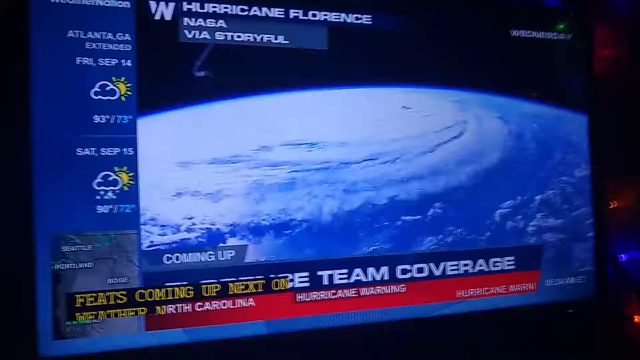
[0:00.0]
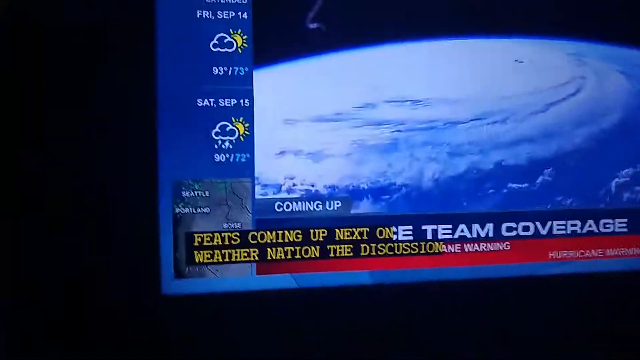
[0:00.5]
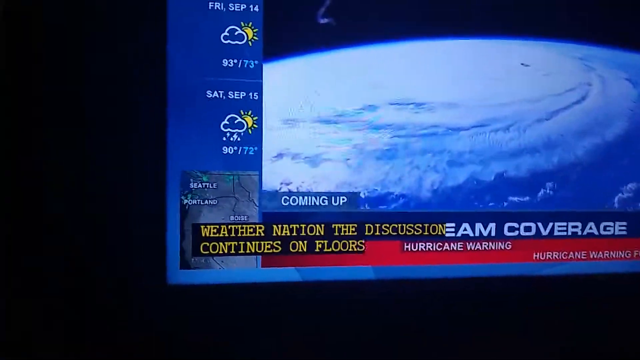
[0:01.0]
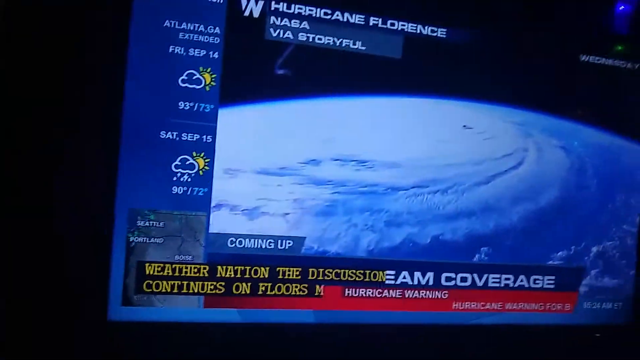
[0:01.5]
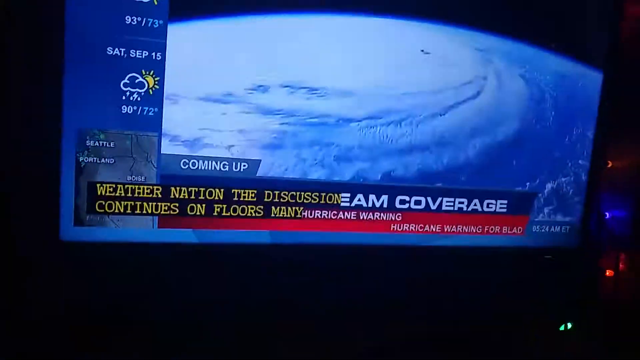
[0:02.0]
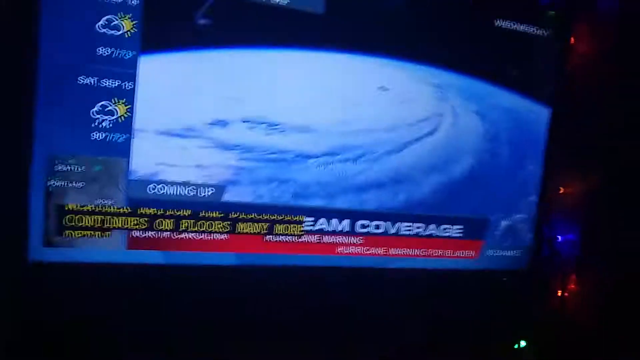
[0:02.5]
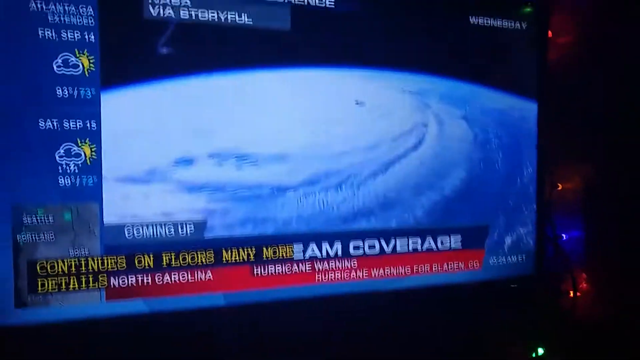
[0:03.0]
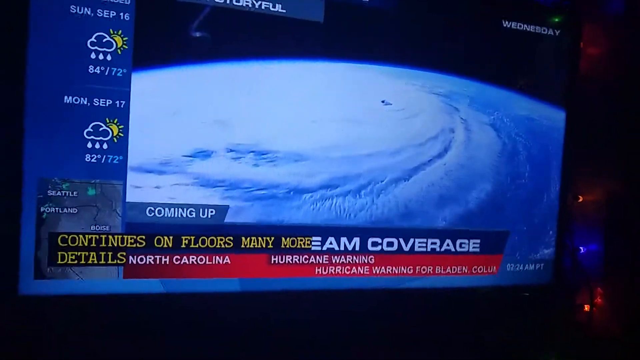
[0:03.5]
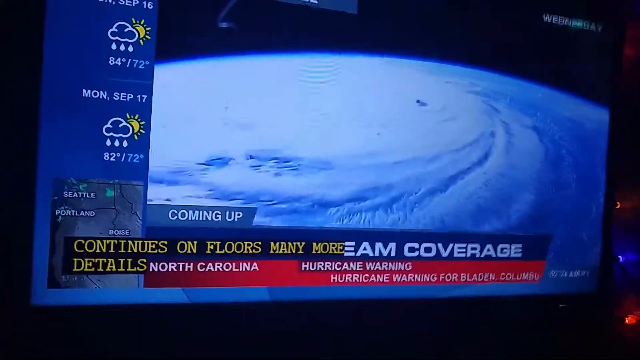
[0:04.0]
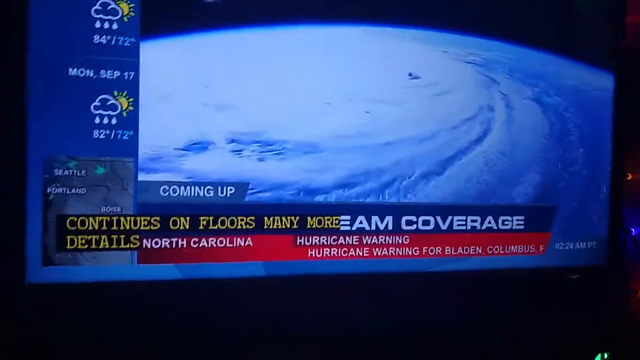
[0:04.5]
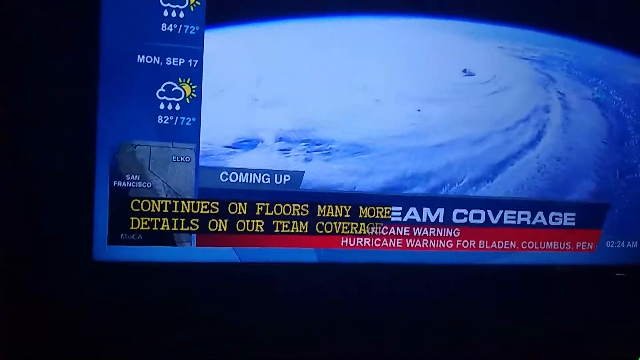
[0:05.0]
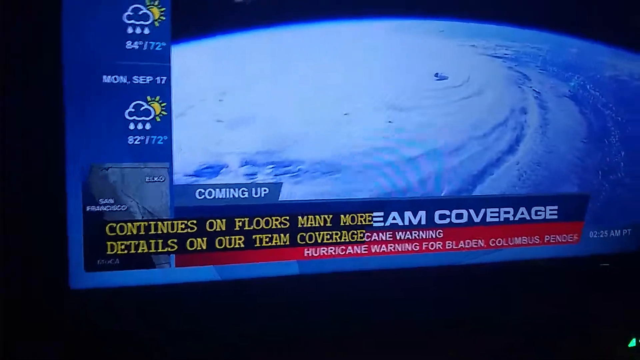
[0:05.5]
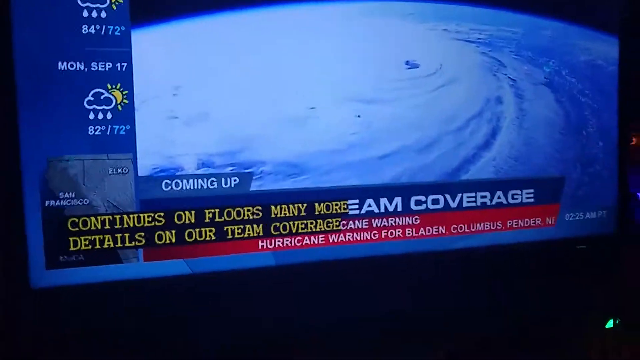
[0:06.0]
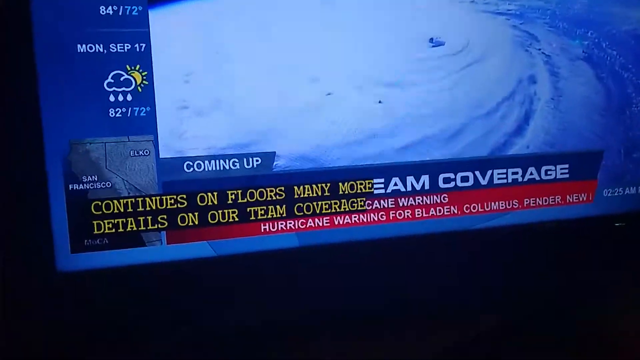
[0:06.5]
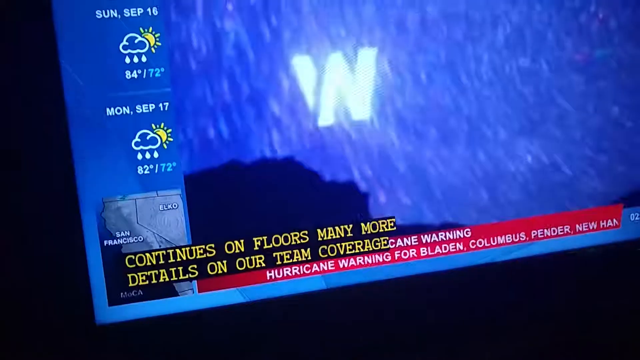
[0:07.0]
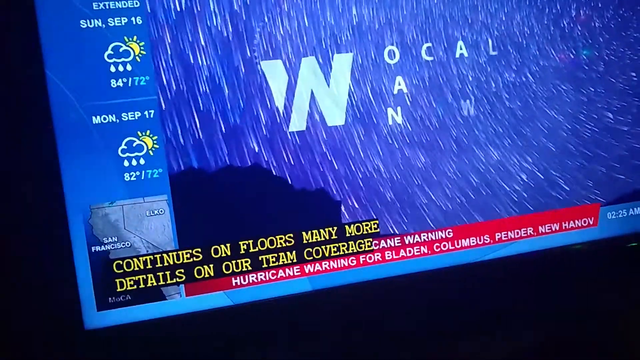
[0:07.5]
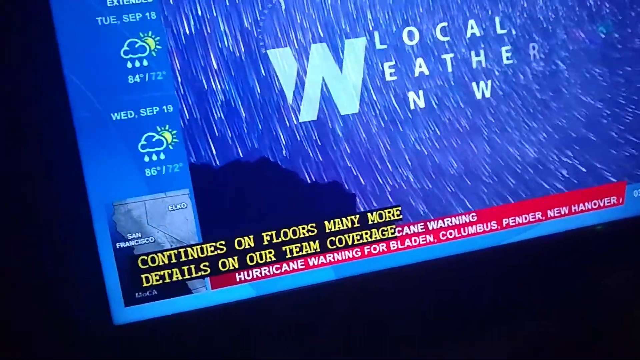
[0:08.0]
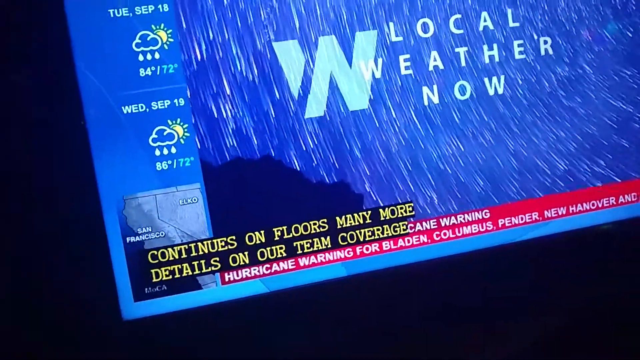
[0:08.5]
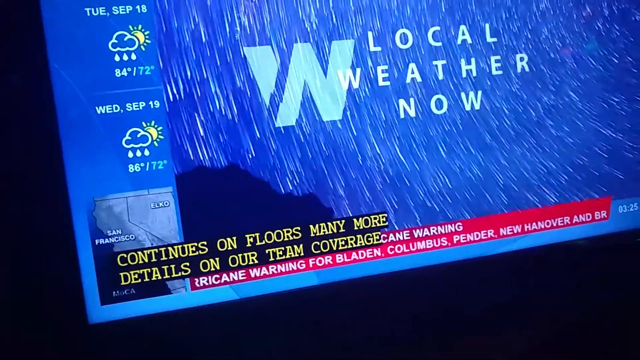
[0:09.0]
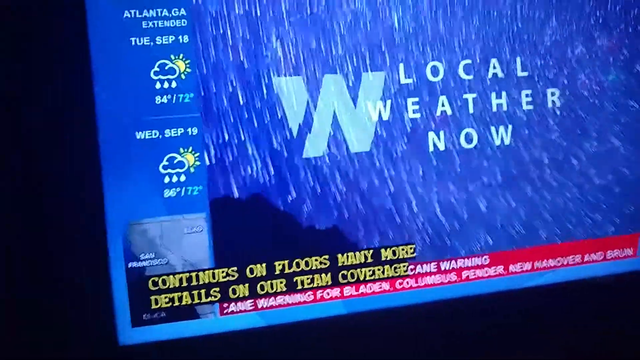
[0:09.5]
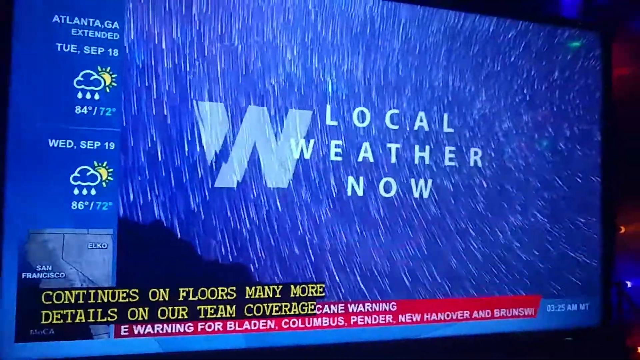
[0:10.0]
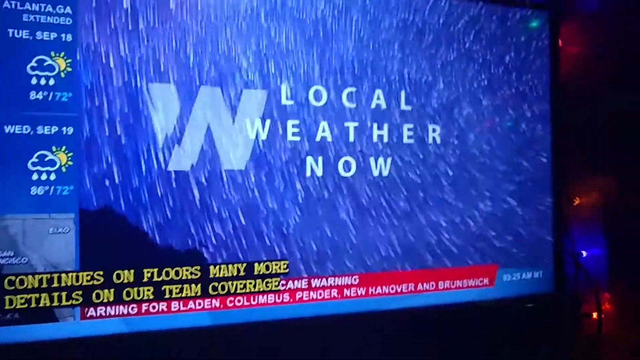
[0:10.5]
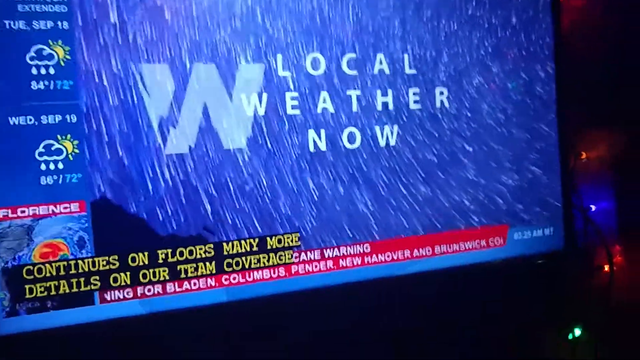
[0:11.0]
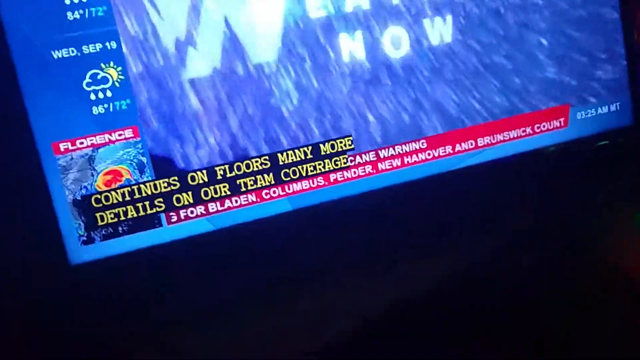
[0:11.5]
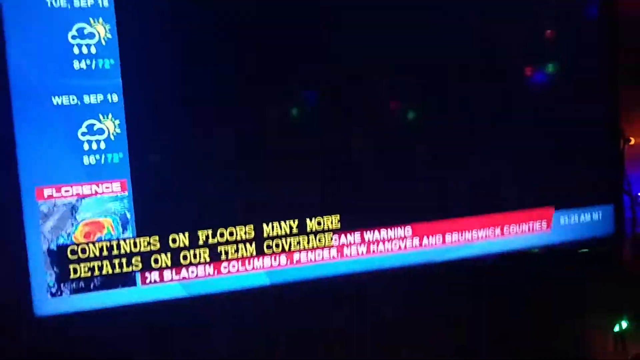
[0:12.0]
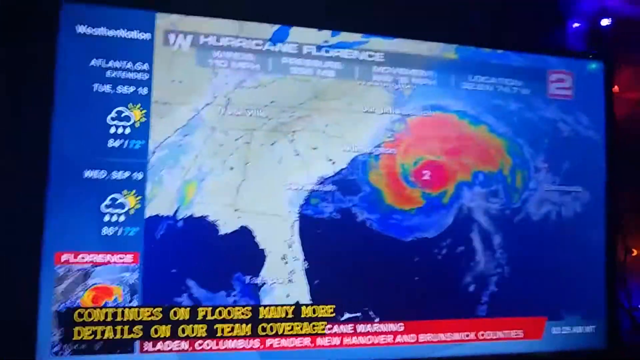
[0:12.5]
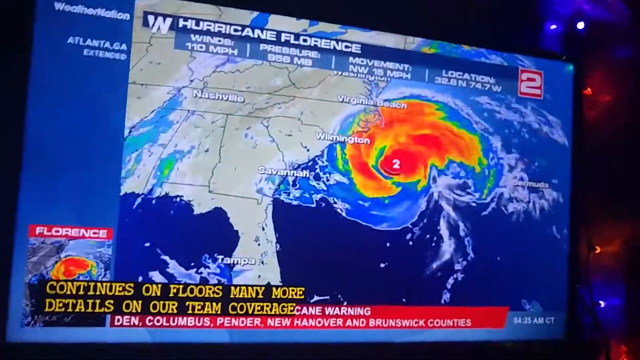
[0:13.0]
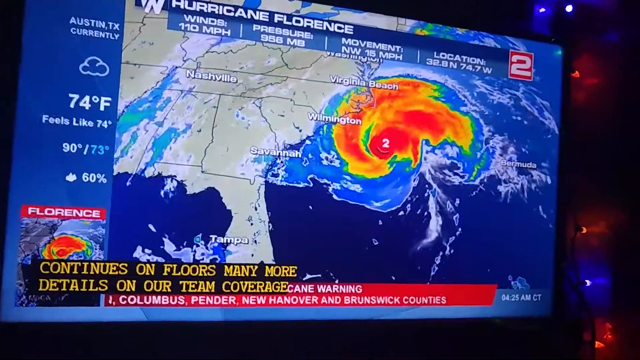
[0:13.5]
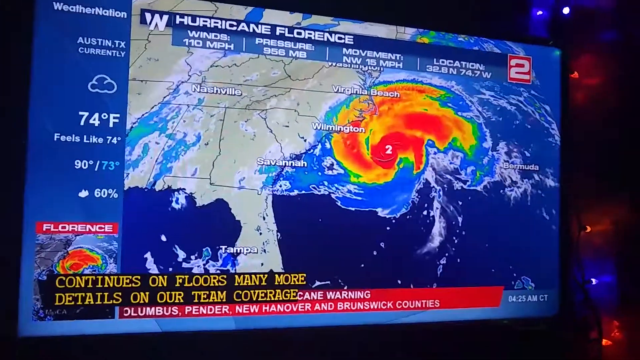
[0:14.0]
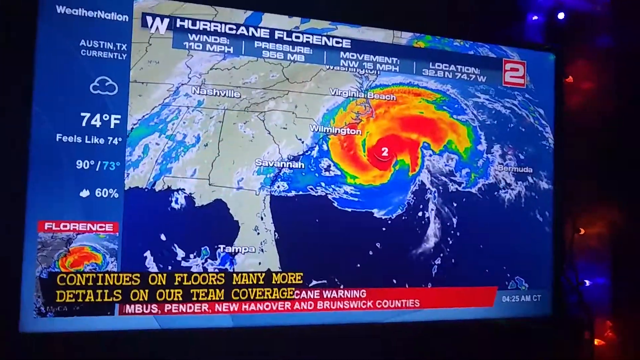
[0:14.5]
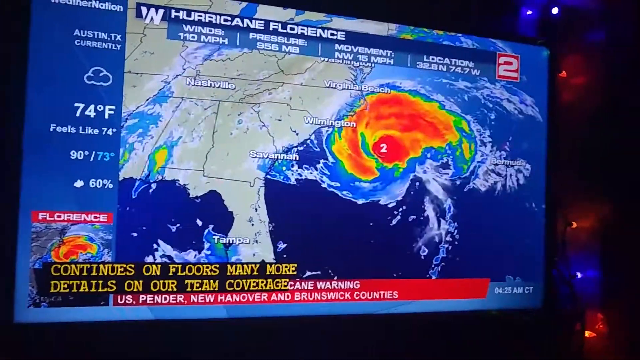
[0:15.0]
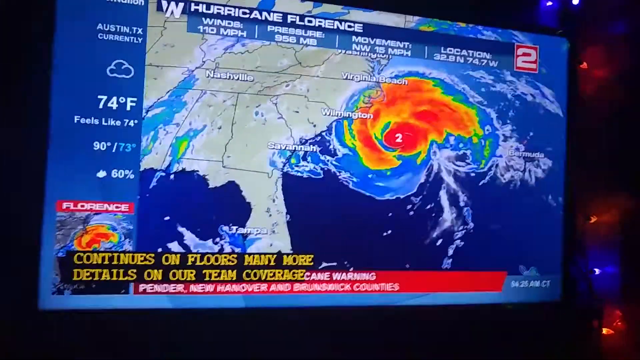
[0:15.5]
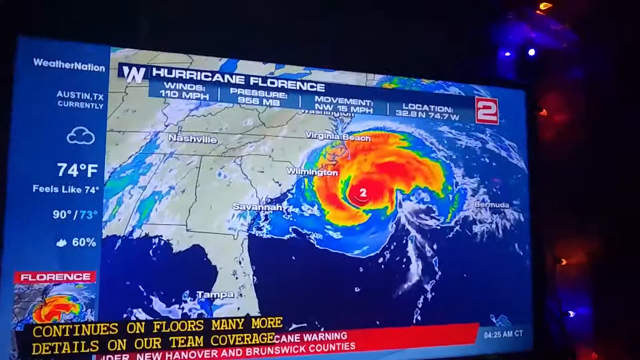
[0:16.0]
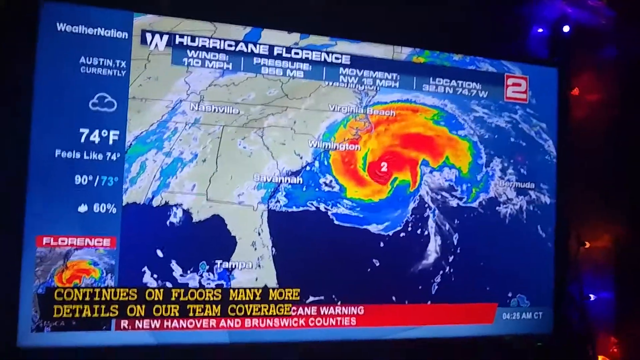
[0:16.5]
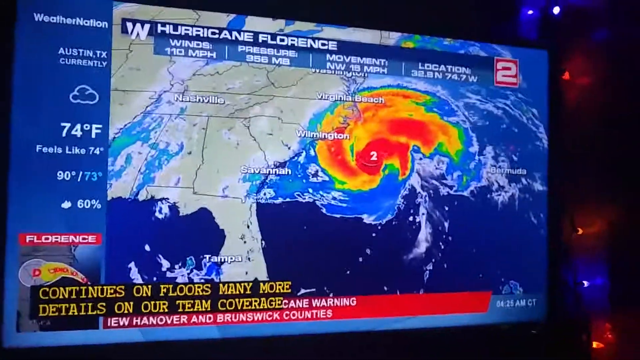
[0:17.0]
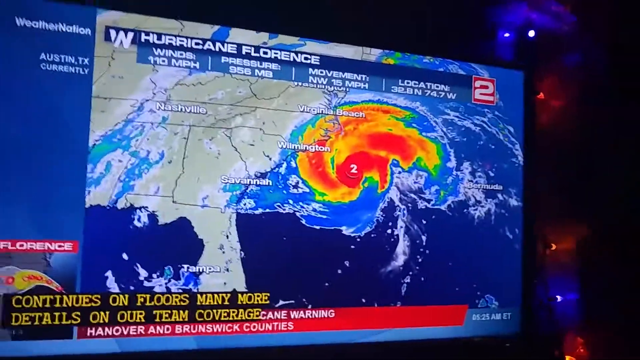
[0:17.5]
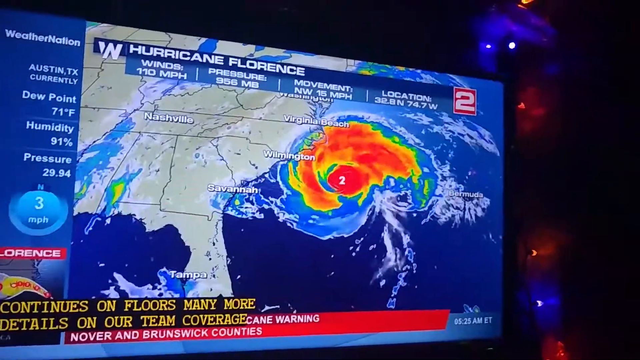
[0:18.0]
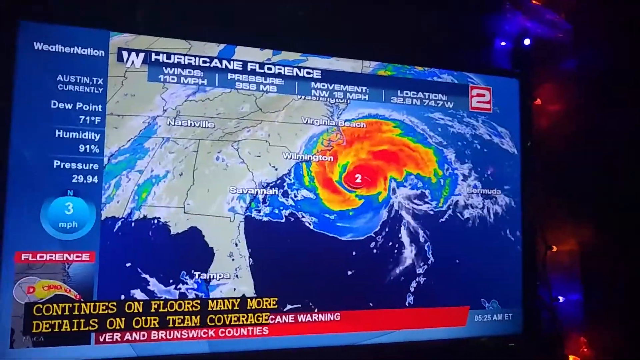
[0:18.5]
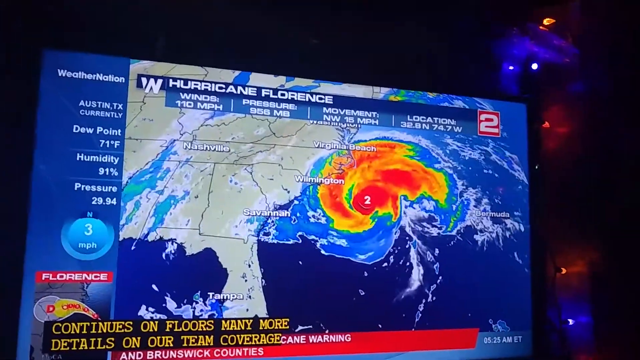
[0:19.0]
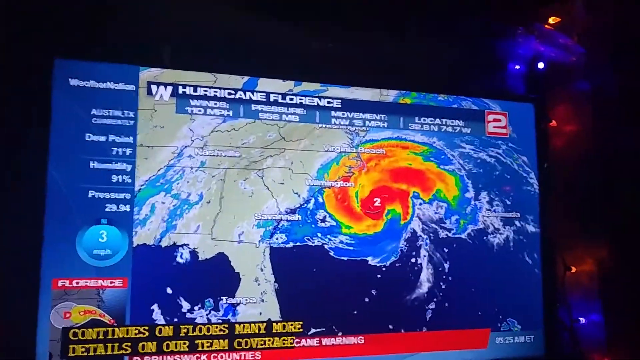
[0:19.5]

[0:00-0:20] Hand-recorded footage shows a television screen with what appears to be a news broadcast. Text at the top reads "Hurricane Florence, NASA, via Storyful." At the bottom, a title card is partially covered by closed captioning in yellow lettering that comes up from the bottom of the screen. On the left side there appears to be a weather forecast. The main area of the screen shows satellite footage of a hurricane forming above the Earth. After a transition, a logo reading "W, local weather now" appears in front of time-lapse footage of stars. The screen then transitions to a weather map of the eastern United States, with Nashville, Savannah, Wilmington and Virginia Beach shown in text, and a heat map of a hurricane going towards the coast of Carolina.